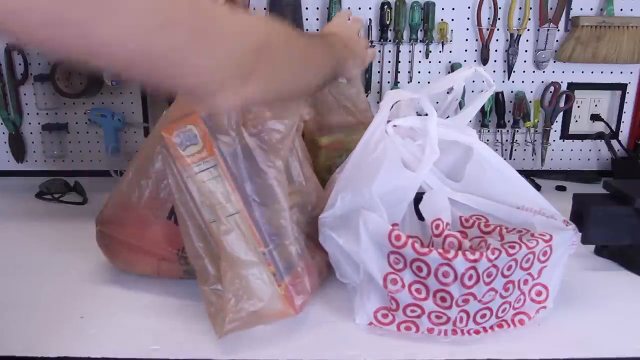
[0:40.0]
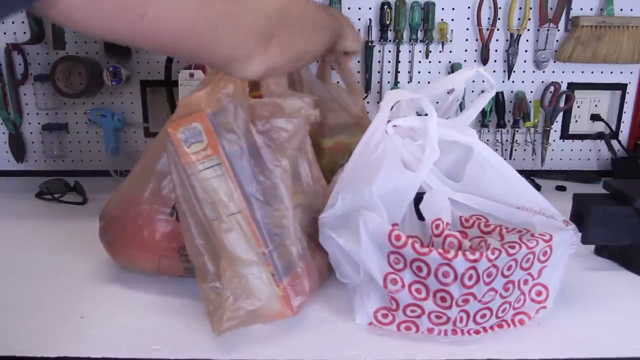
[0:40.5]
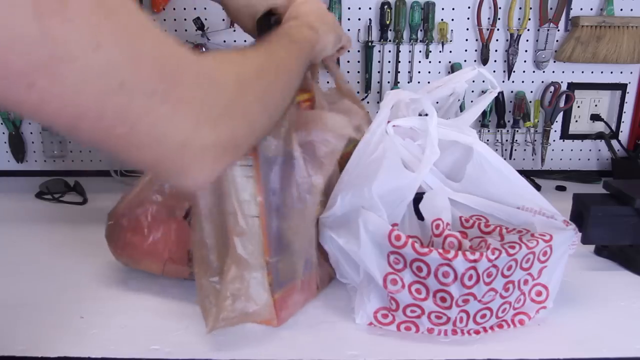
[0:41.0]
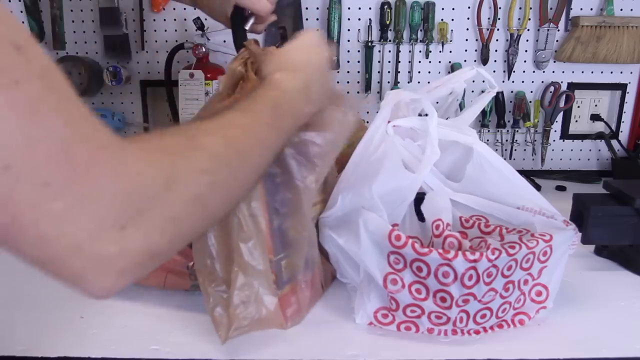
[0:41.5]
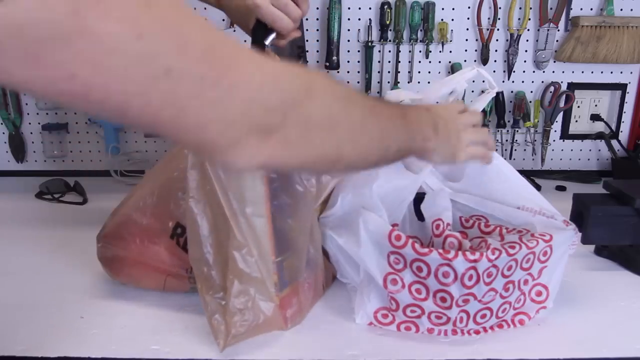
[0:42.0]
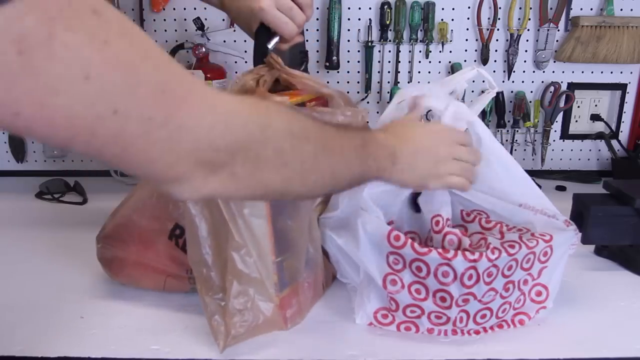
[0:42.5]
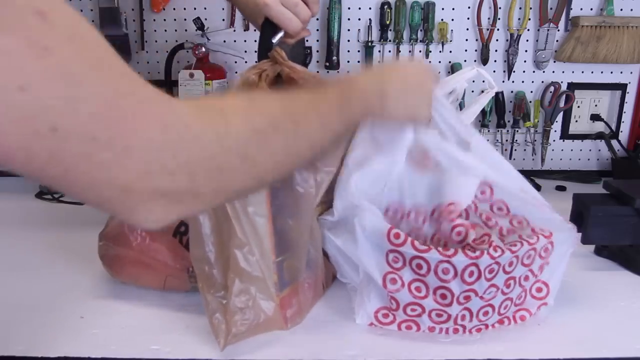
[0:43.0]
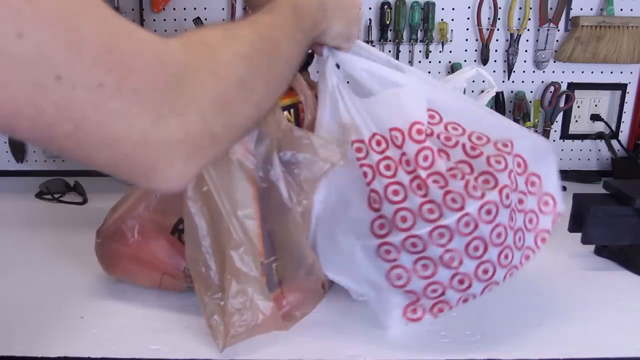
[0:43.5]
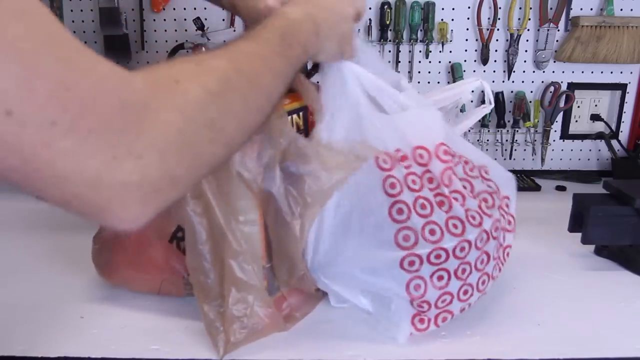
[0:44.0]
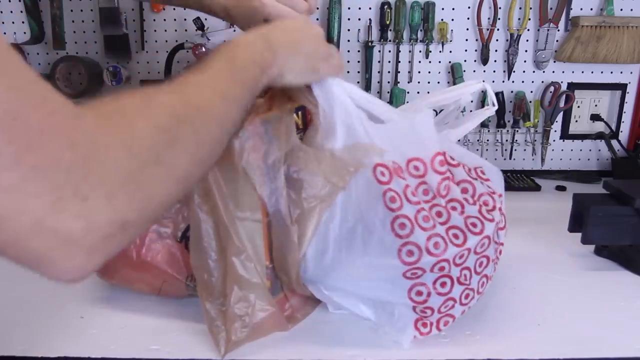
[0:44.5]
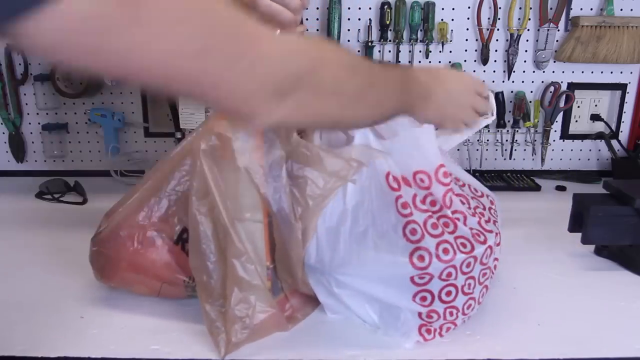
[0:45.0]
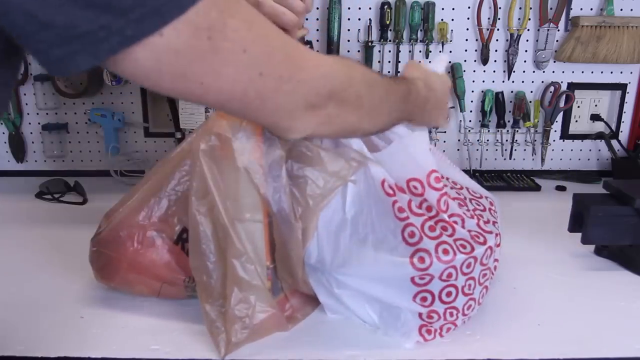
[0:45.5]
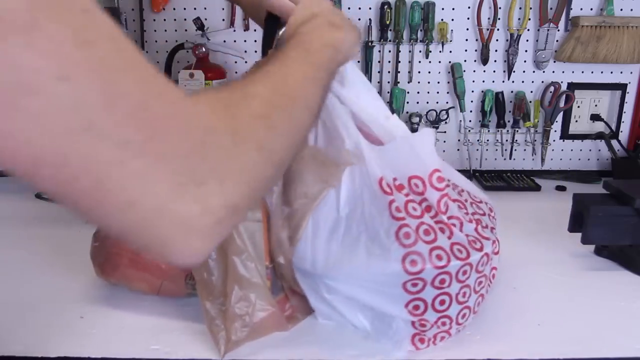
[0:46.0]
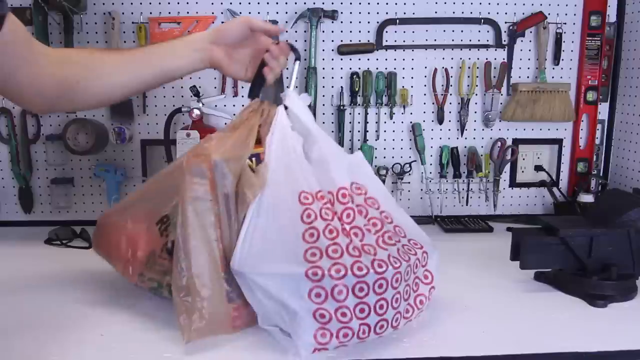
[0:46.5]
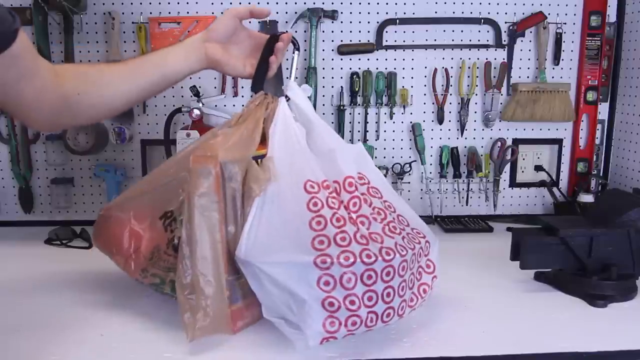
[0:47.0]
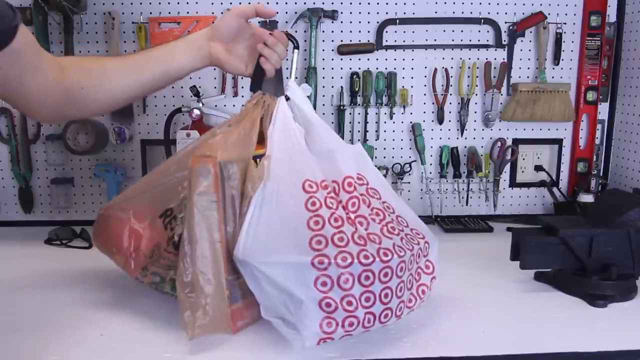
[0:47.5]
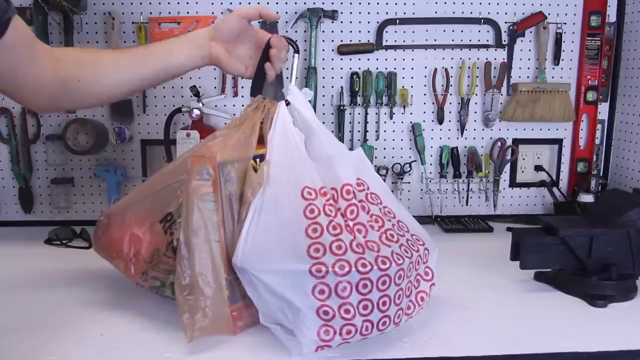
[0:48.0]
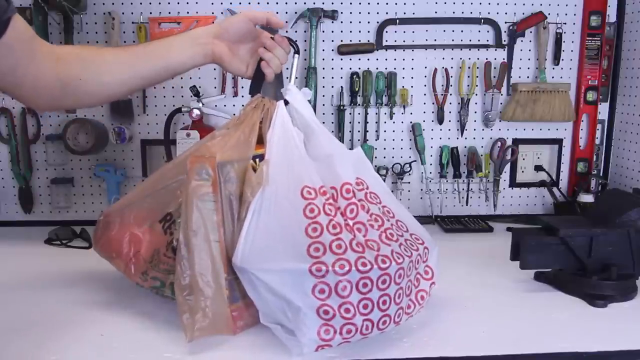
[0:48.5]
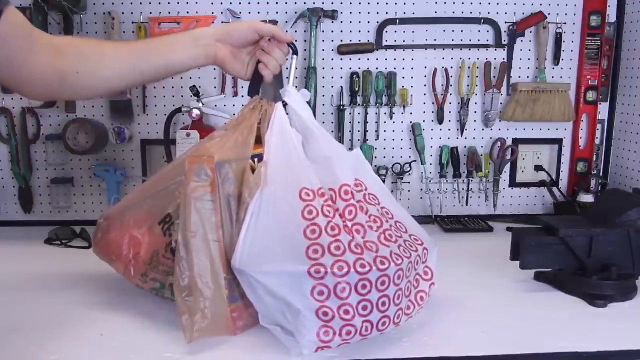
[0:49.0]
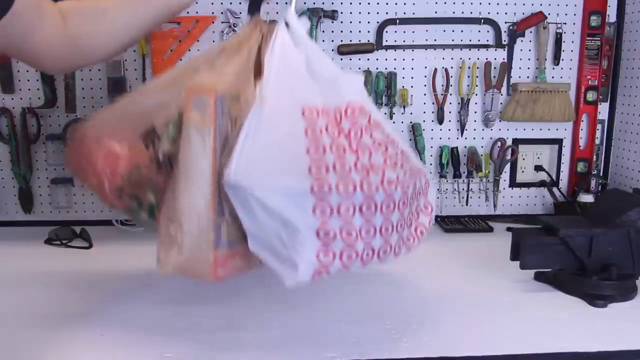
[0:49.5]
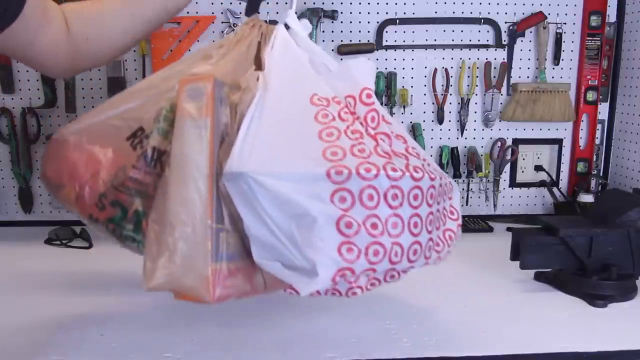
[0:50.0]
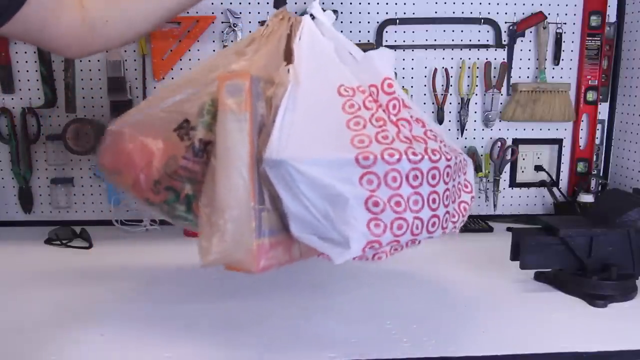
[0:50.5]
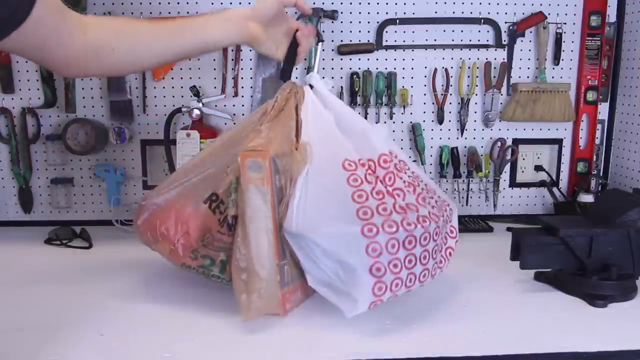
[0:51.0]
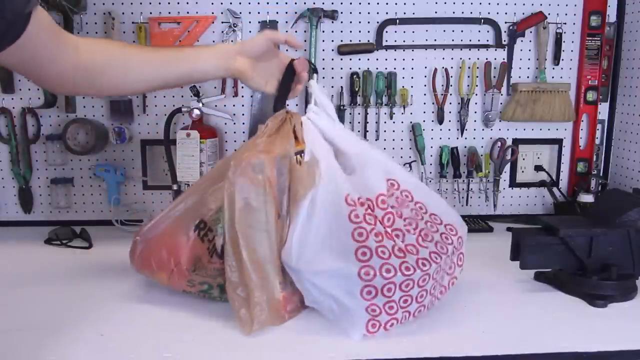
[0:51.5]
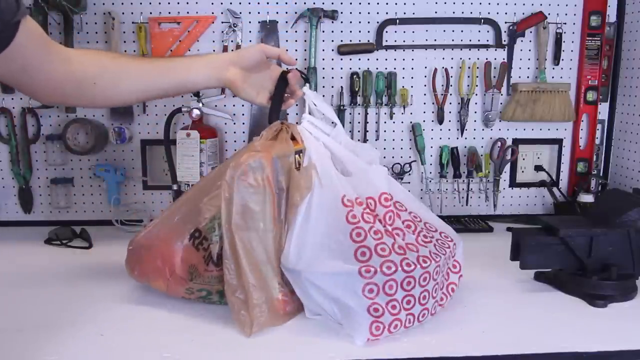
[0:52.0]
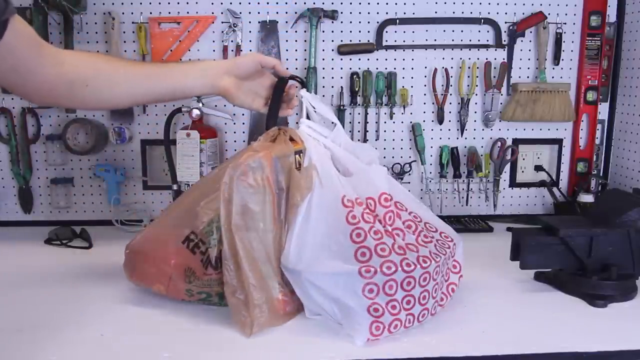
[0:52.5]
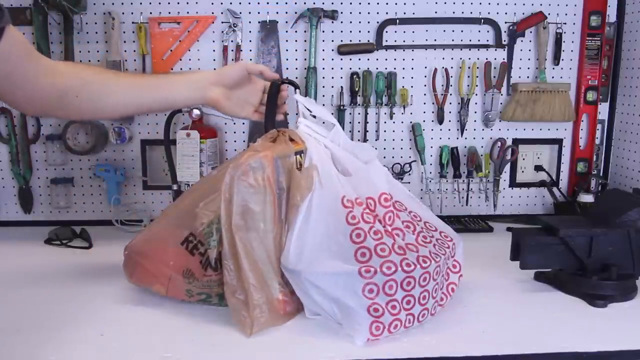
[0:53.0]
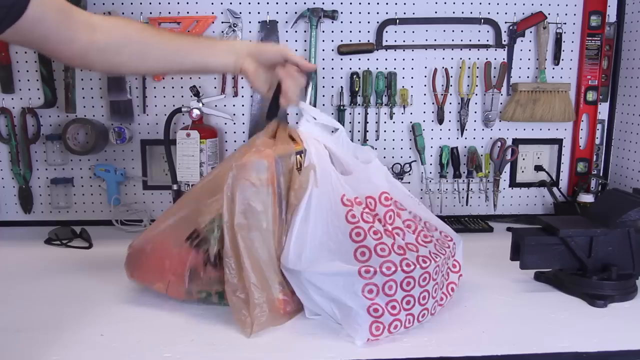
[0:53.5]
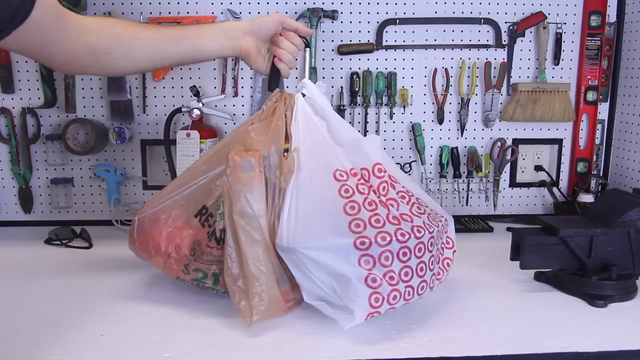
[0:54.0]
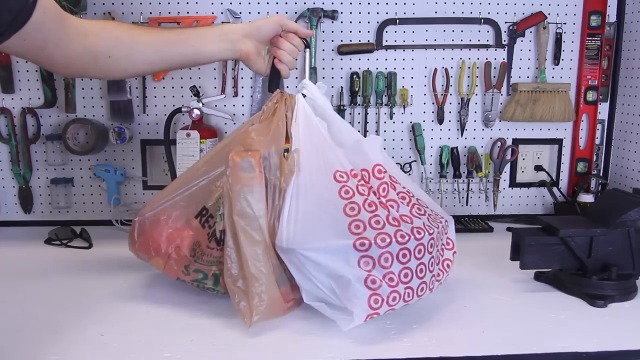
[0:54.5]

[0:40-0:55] The person uses the climber's tool to lift all of the bags, possibly to show the ease of carrying groceries this way. The view widens, revealing a measuring tool on the wall for measuring the level of a surface and a hacksaw at the top. To the left there appears to be a hammer, possibly a soft rubber hammer judging by its shape. The person's shirt is visible more clearly and looks dark blue and woolen. To the right in the shot is an unidentified plastic container or plastic item.